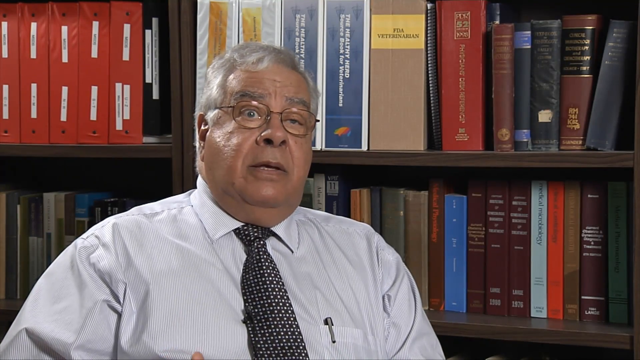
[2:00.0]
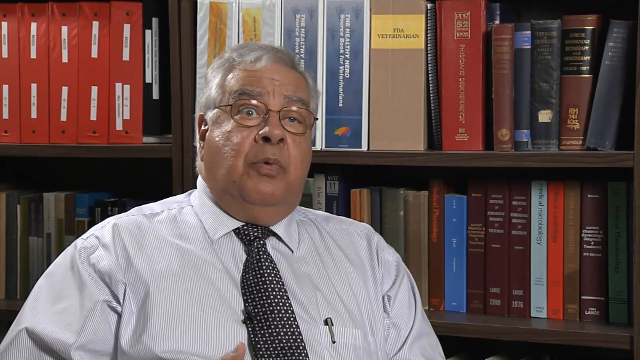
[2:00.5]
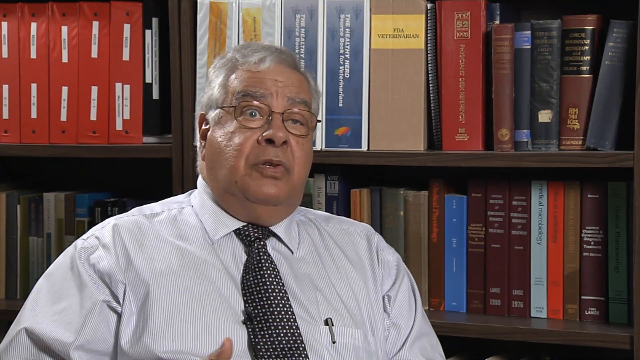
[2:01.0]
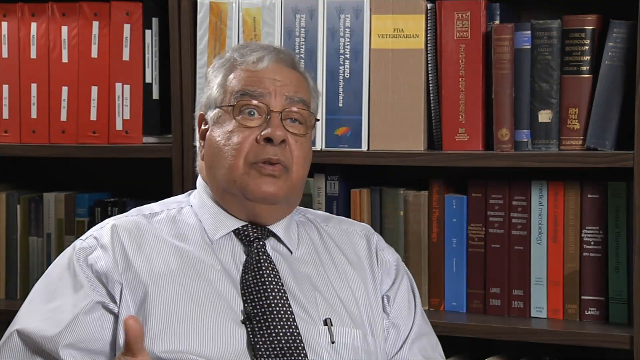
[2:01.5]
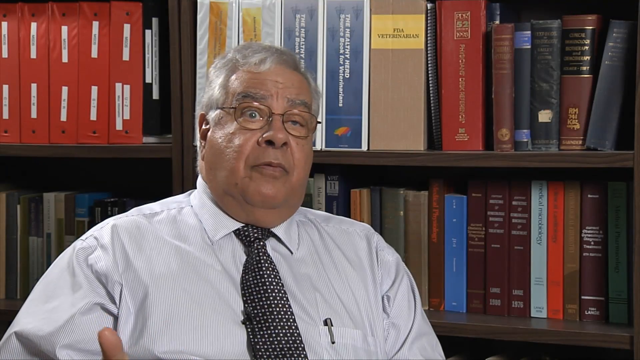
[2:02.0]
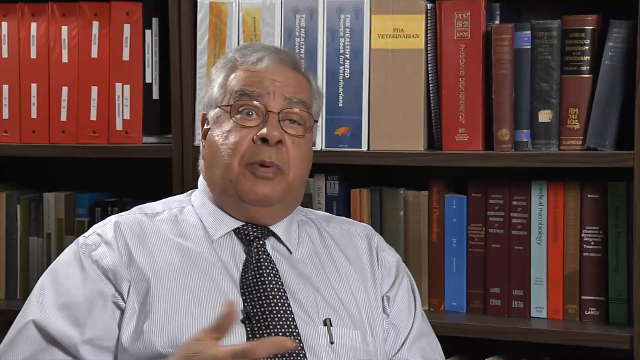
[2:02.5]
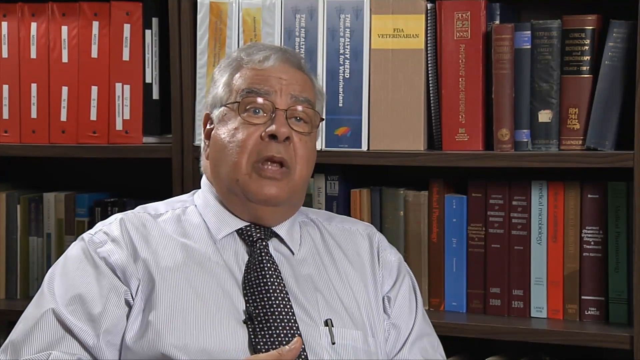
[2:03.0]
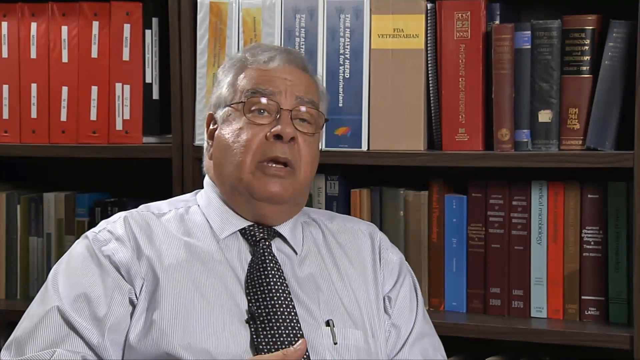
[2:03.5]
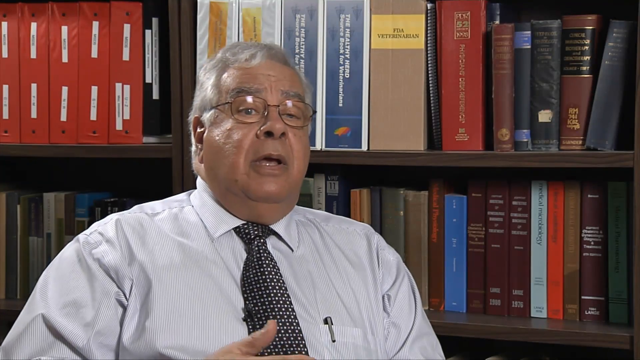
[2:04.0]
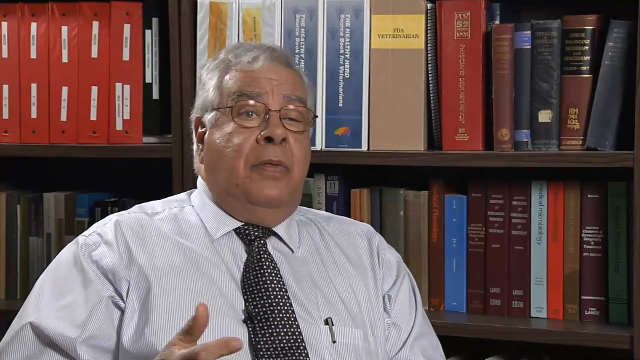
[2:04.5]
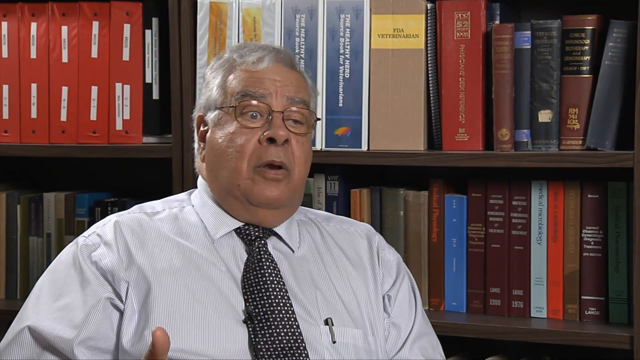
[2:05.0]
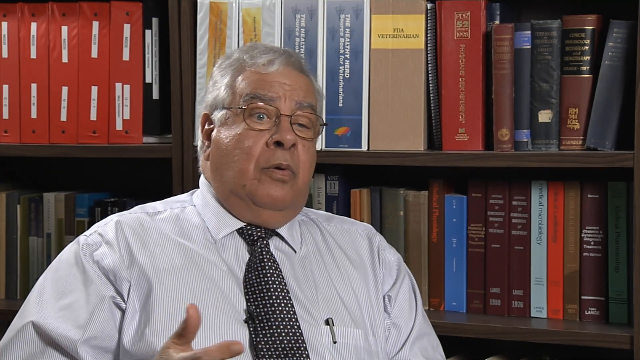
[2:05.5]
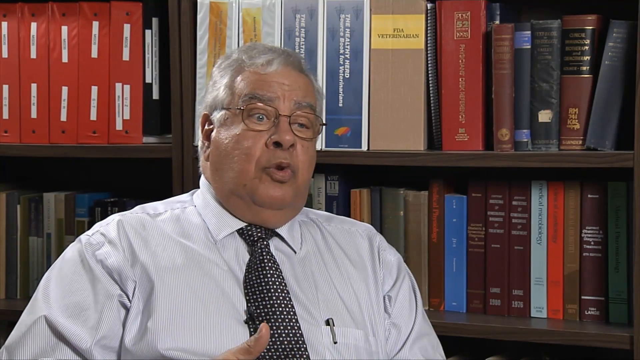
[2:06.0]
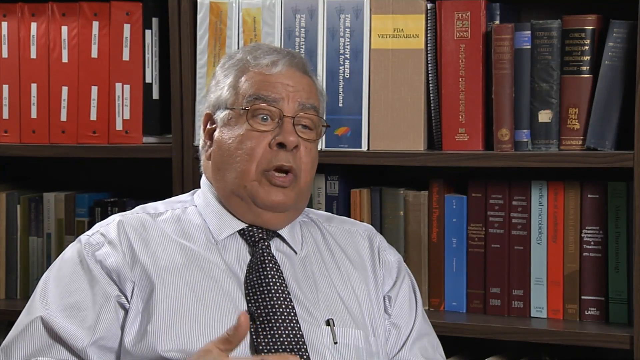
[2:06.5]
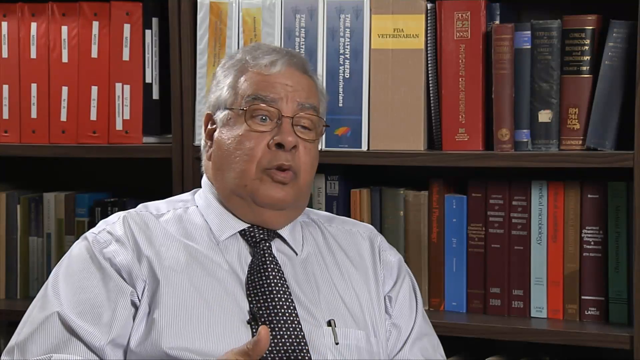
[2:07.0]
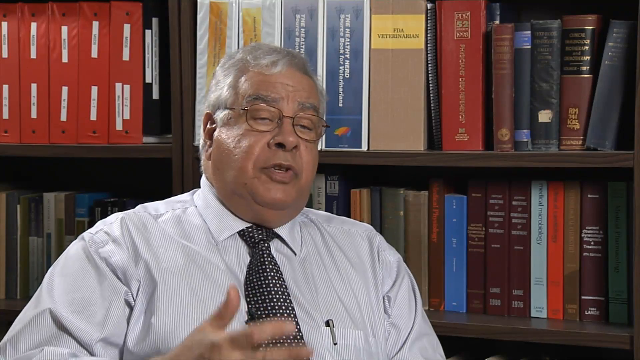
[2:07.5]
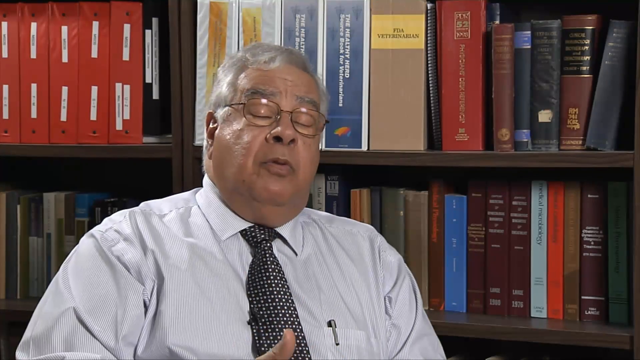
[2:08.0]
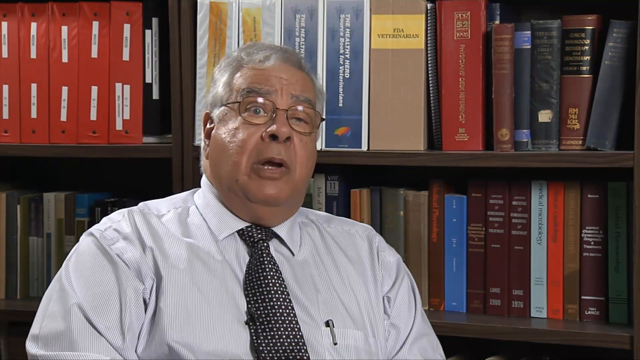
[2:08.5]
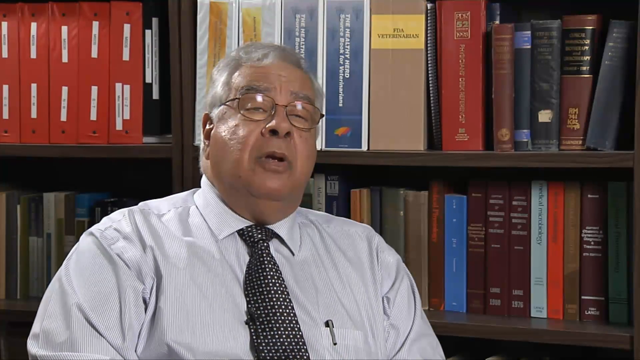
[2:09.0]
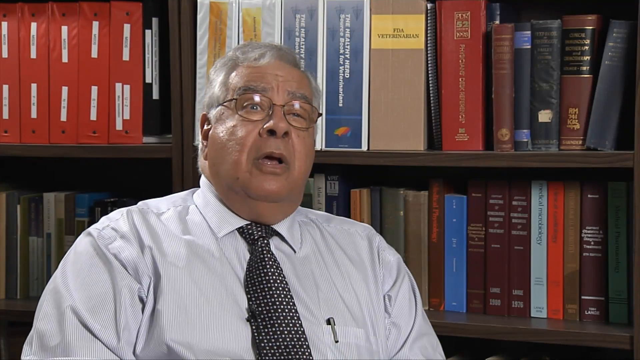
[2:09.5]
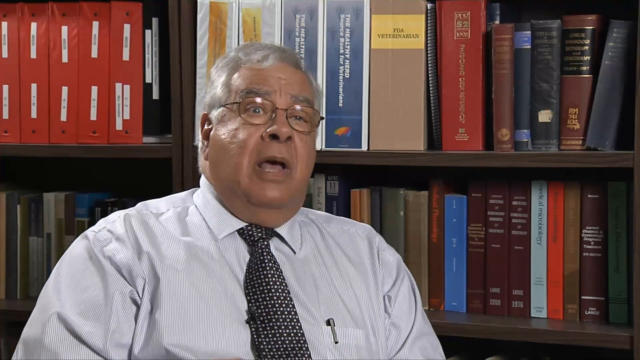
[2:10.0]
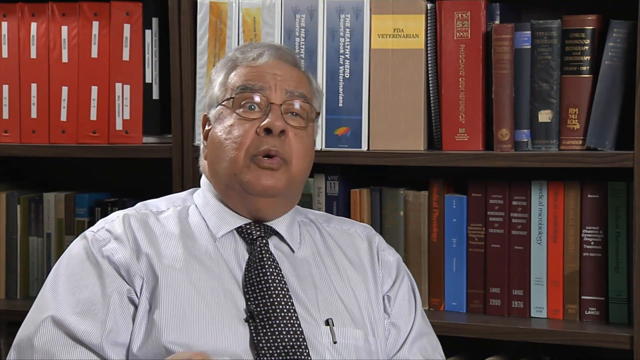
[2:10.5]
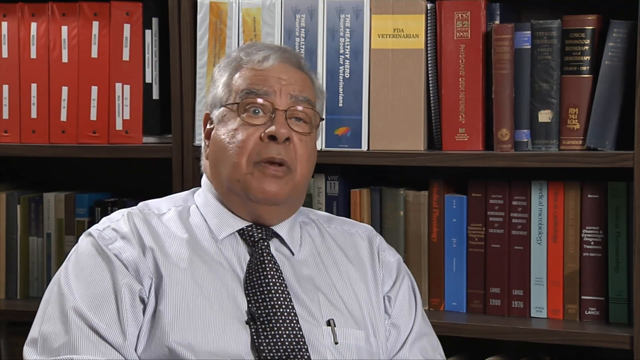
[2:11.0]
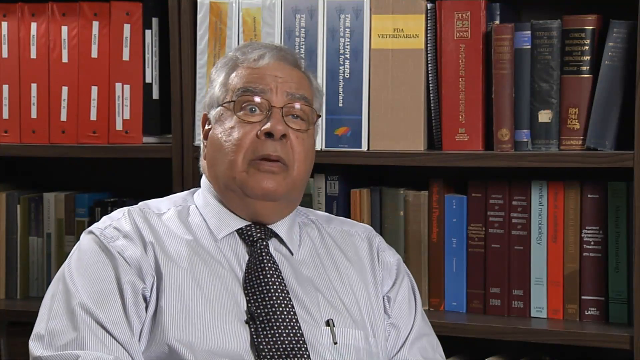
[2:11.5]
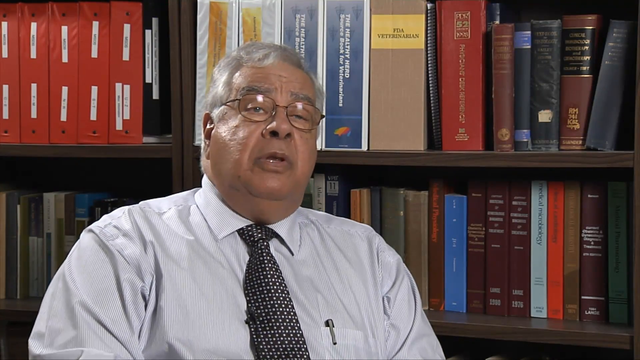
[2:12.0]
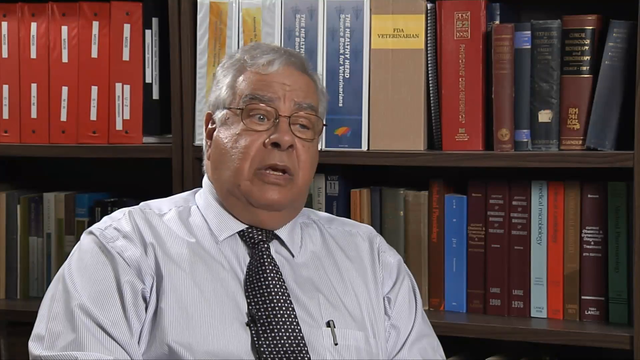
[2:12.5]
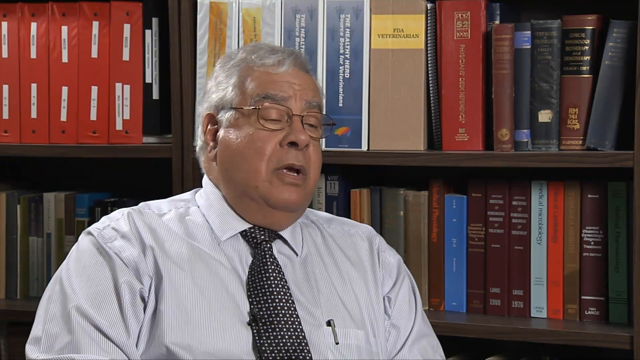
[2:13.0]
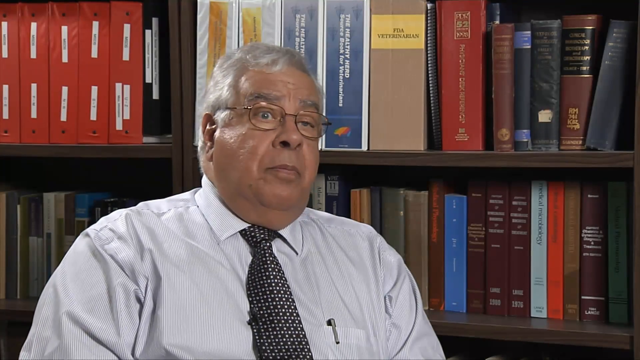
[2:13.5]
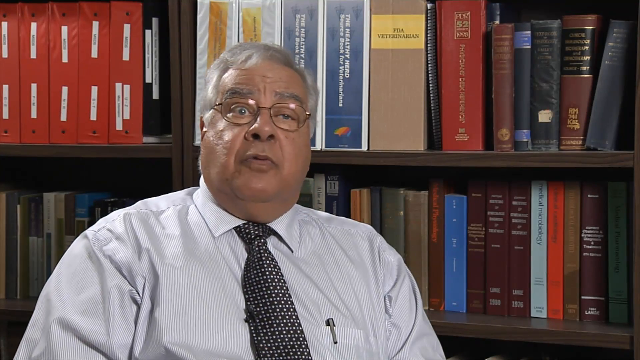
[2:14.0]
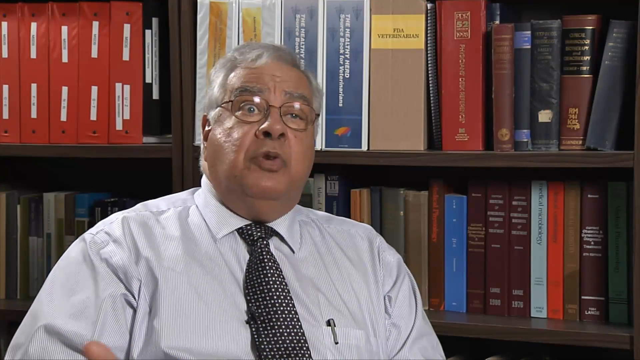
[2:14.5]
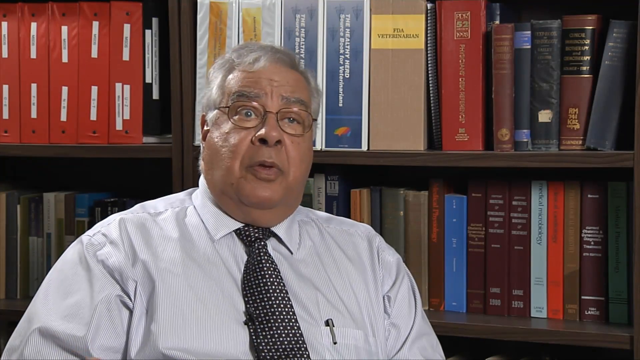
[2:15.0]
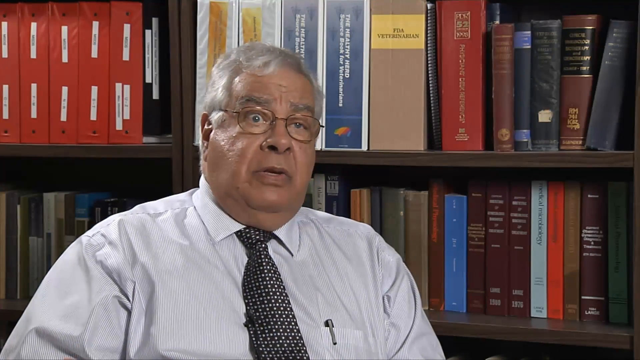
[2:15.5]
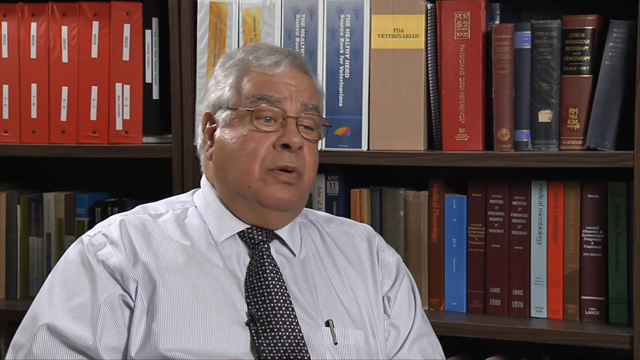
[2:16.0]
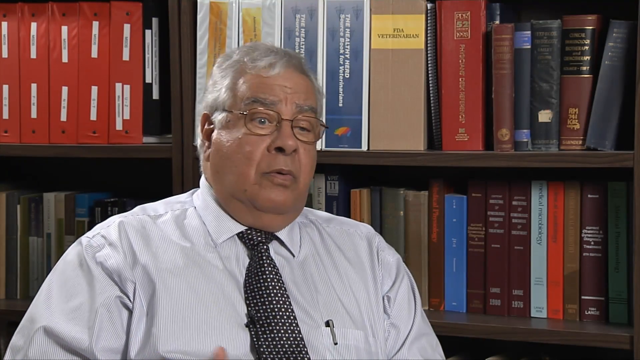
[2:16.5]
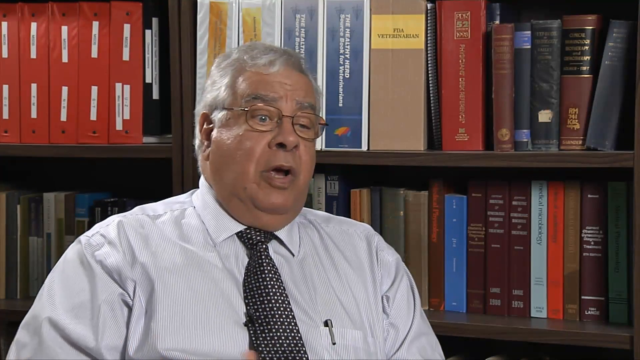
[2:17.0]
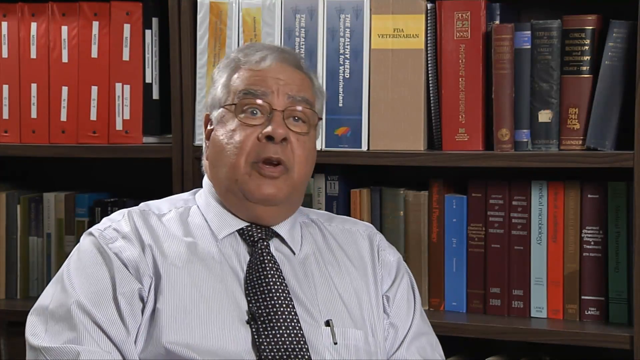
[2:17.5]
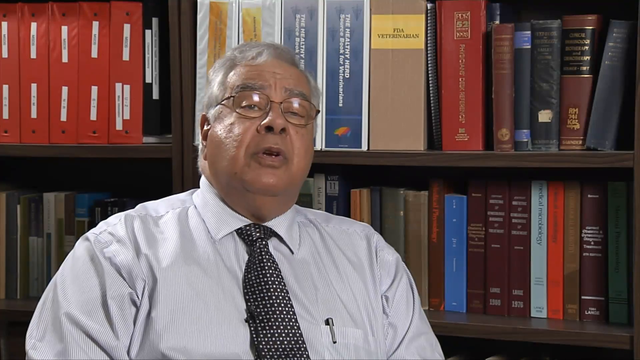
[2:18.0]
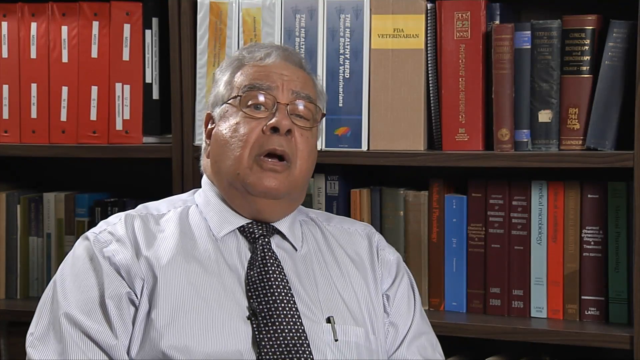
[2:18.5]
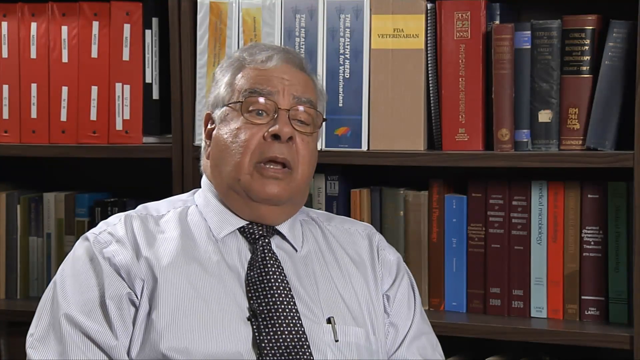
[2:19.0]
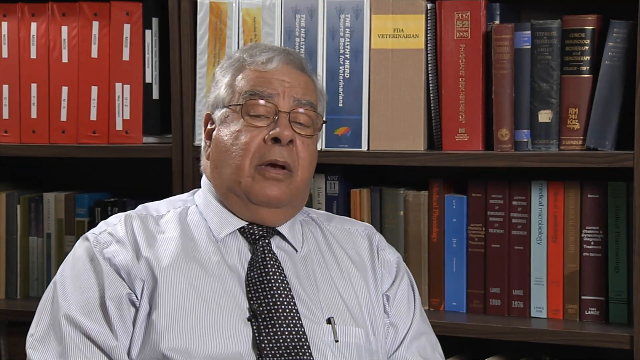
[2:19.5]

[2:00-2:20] The man is in the same seat with the same backdrop of bookshelves, which could be a library or an office. No other illustrations or points of fact are shown.